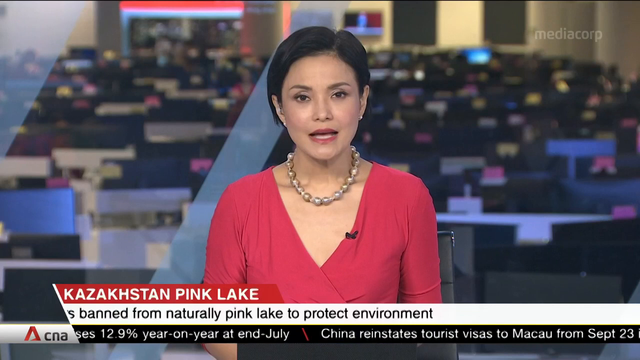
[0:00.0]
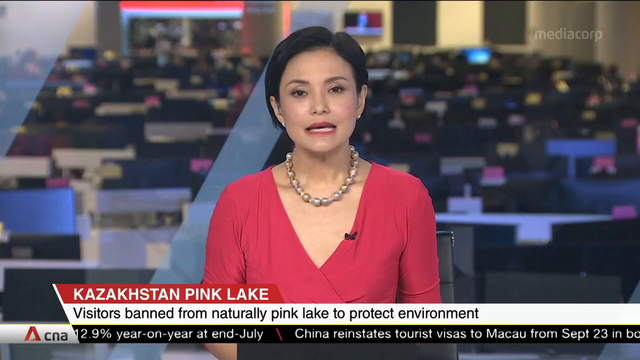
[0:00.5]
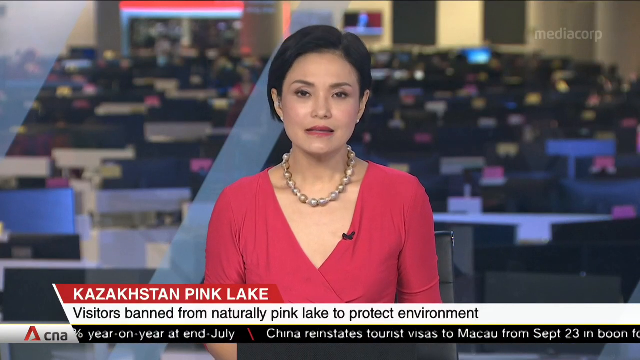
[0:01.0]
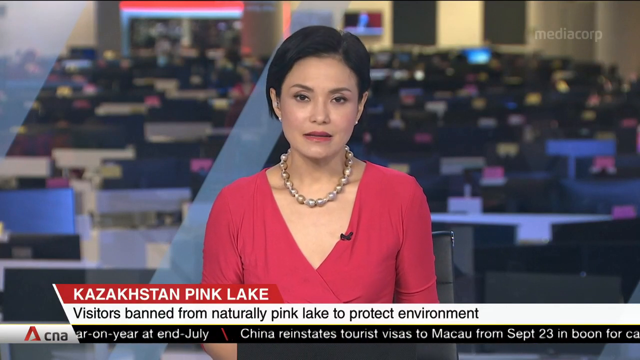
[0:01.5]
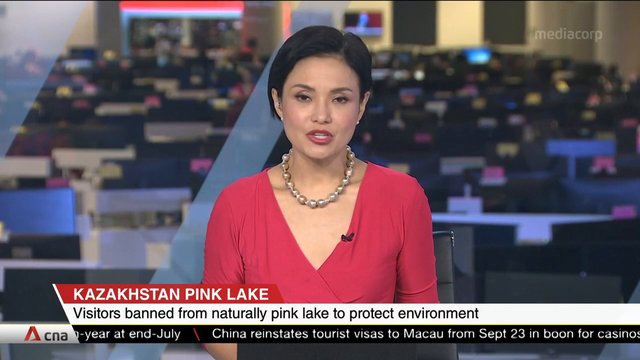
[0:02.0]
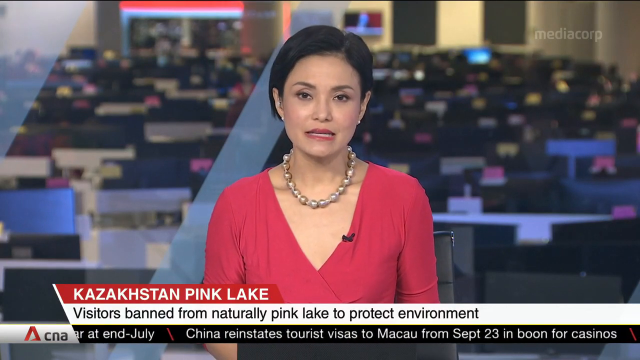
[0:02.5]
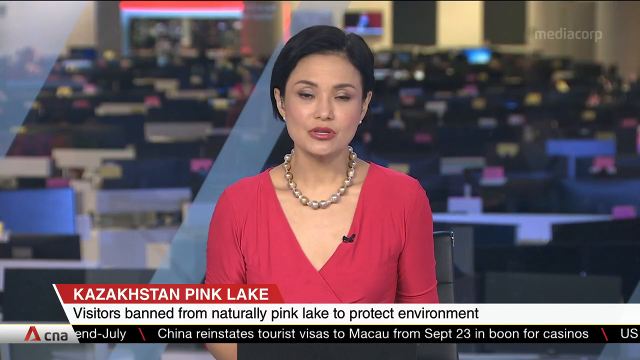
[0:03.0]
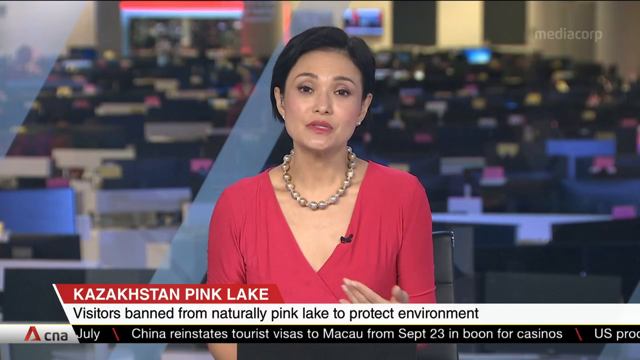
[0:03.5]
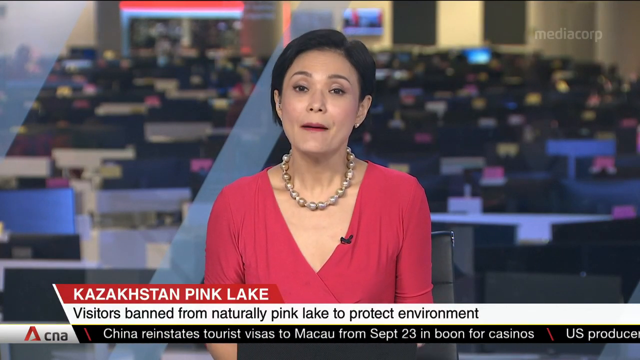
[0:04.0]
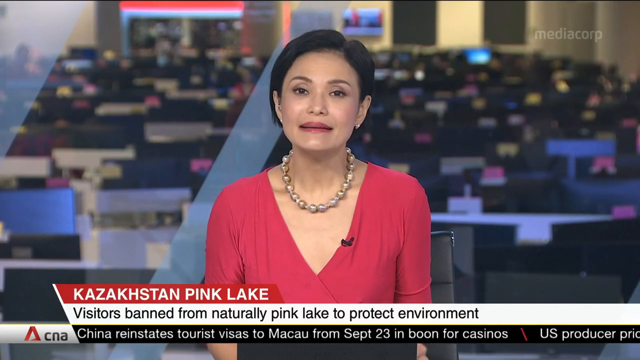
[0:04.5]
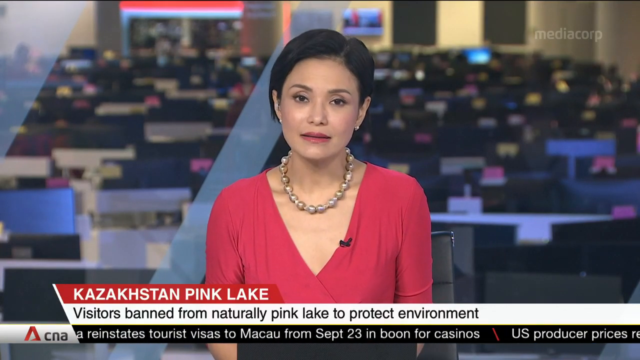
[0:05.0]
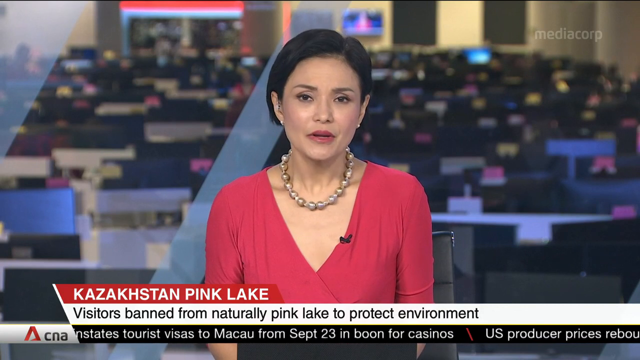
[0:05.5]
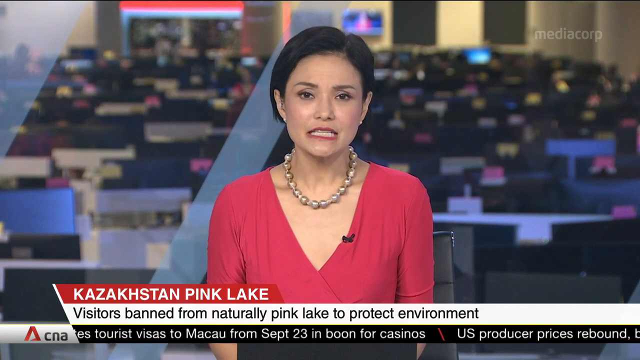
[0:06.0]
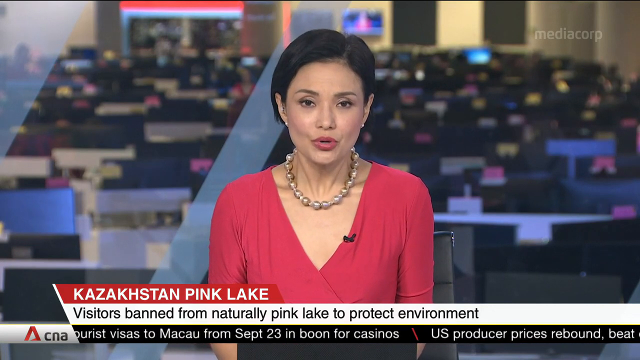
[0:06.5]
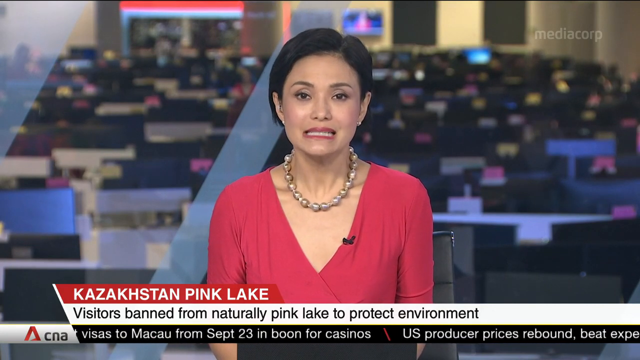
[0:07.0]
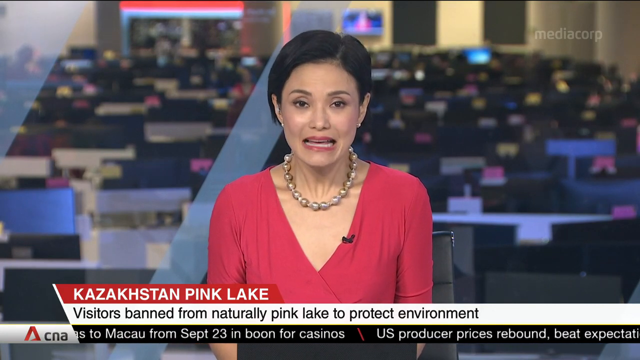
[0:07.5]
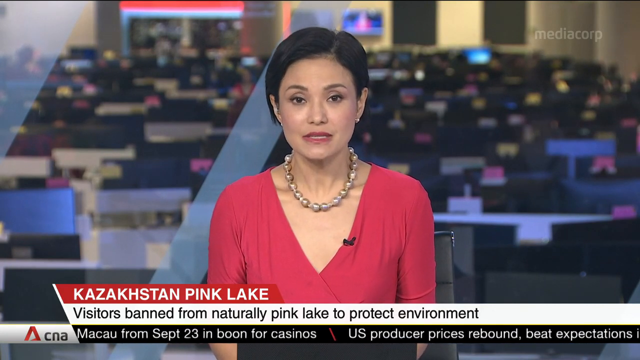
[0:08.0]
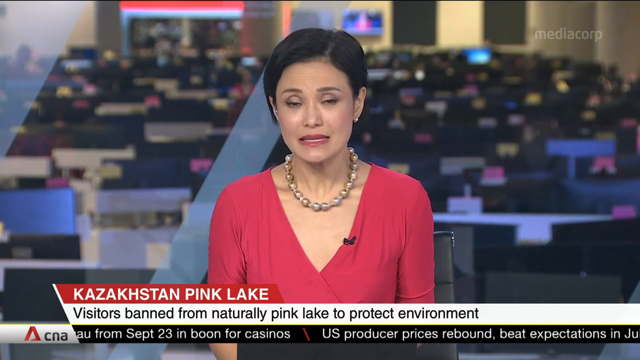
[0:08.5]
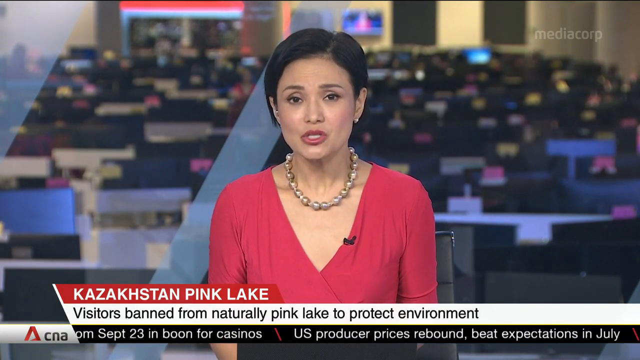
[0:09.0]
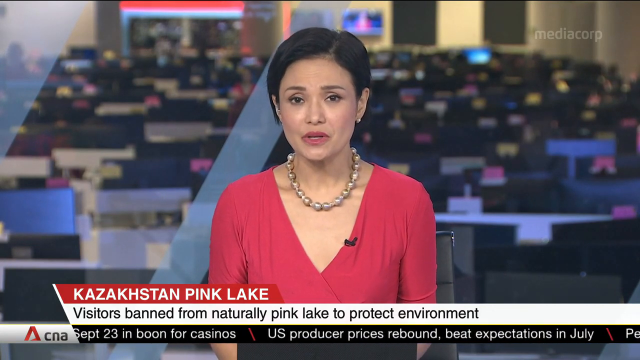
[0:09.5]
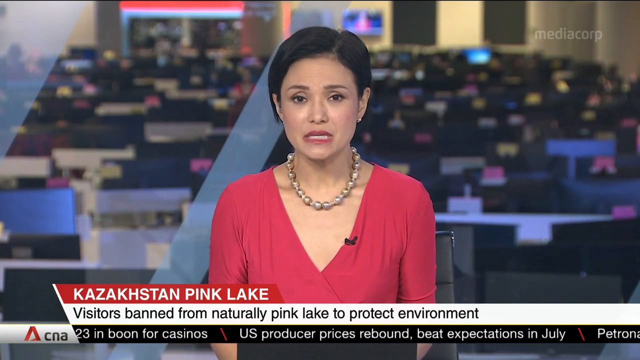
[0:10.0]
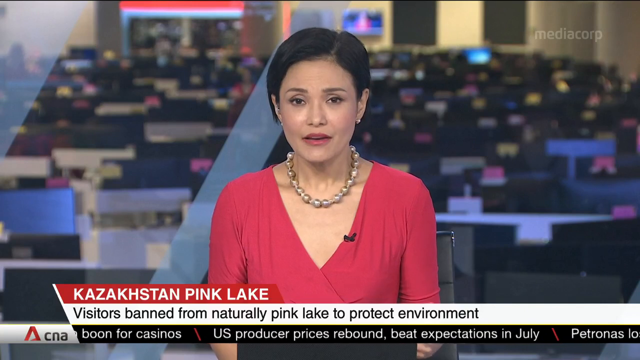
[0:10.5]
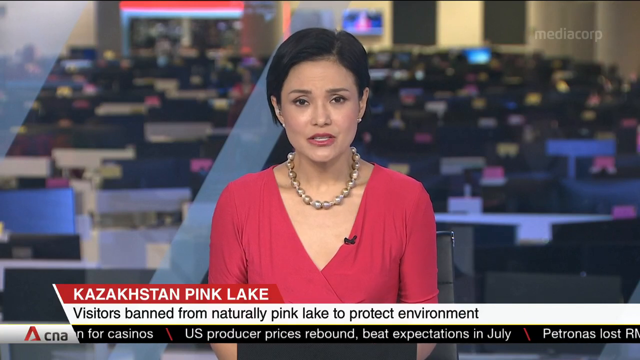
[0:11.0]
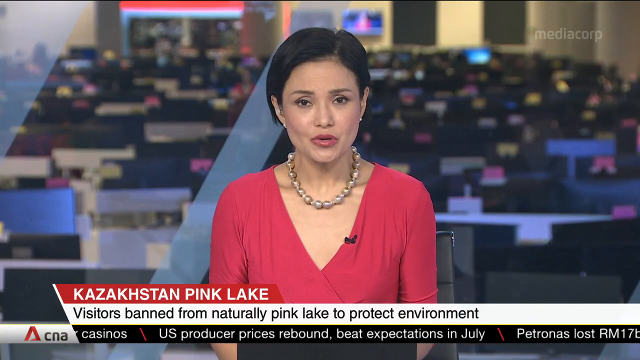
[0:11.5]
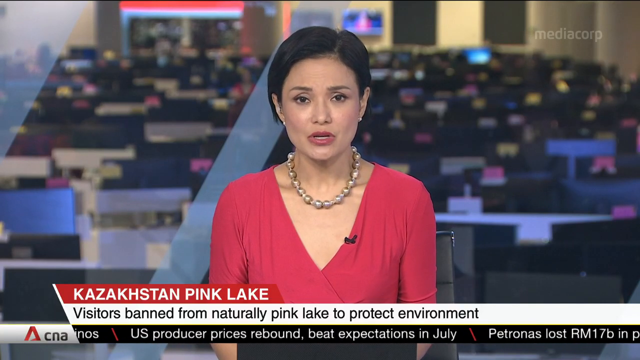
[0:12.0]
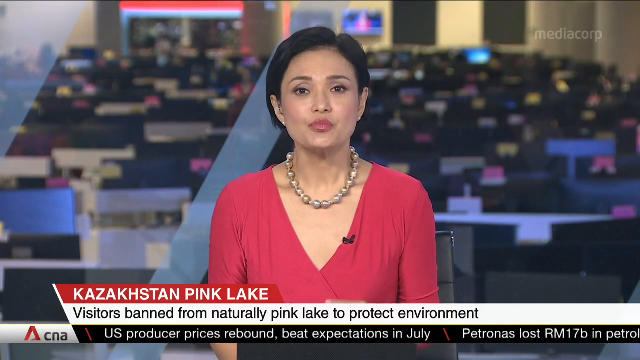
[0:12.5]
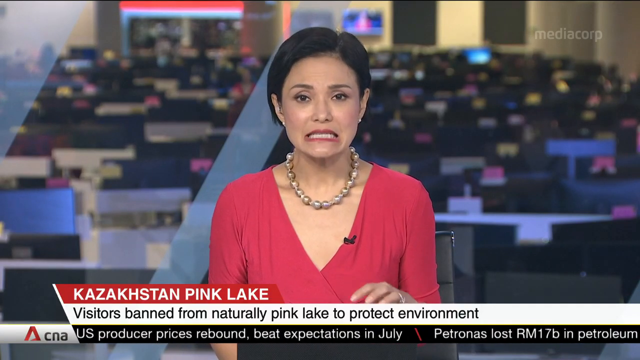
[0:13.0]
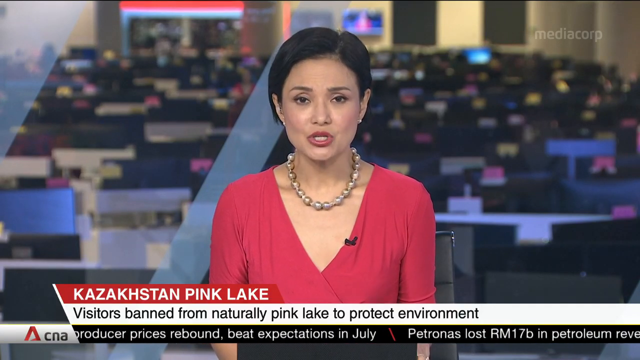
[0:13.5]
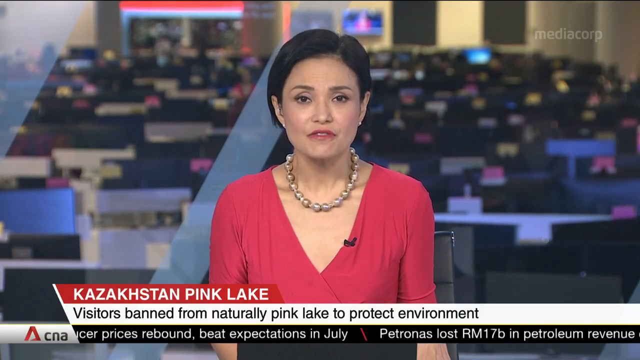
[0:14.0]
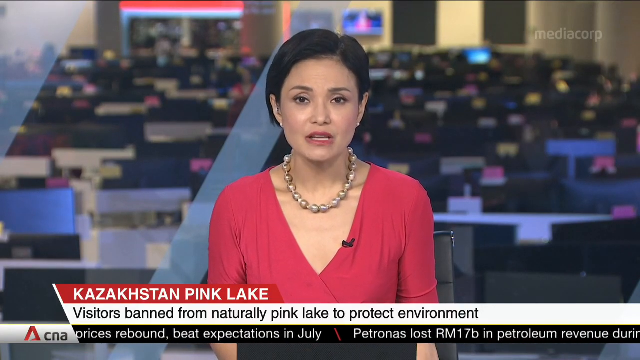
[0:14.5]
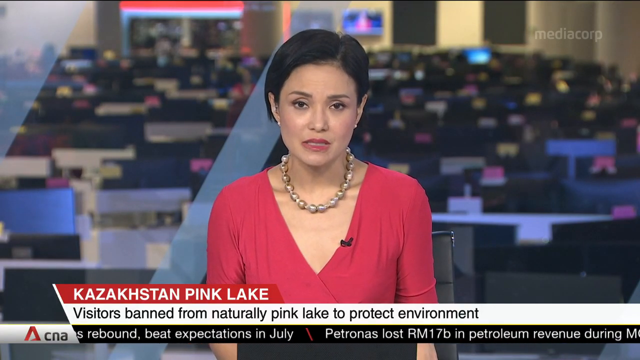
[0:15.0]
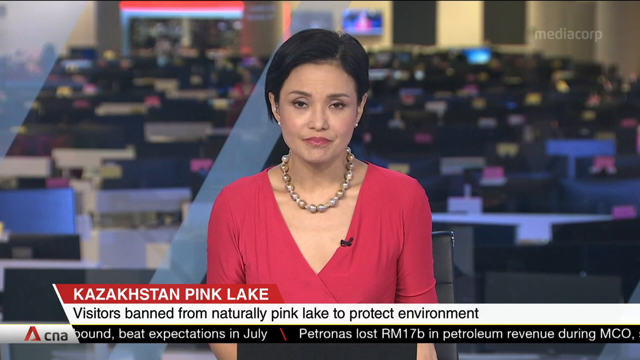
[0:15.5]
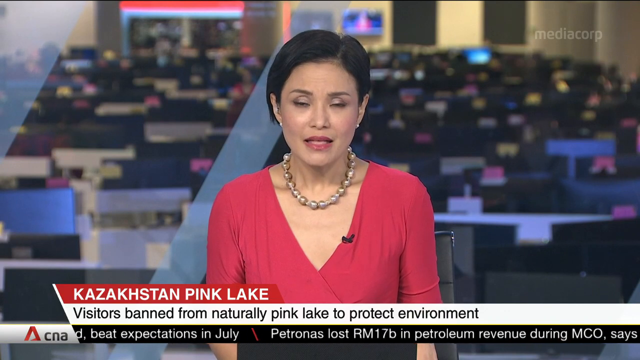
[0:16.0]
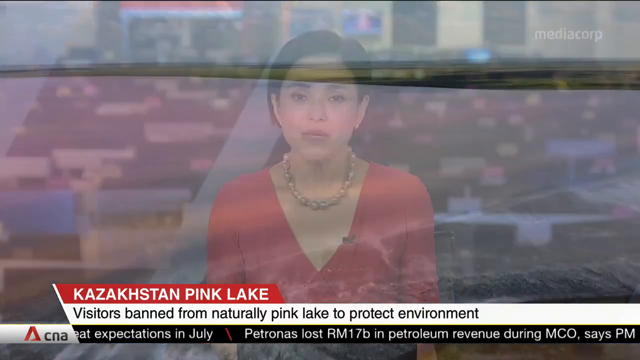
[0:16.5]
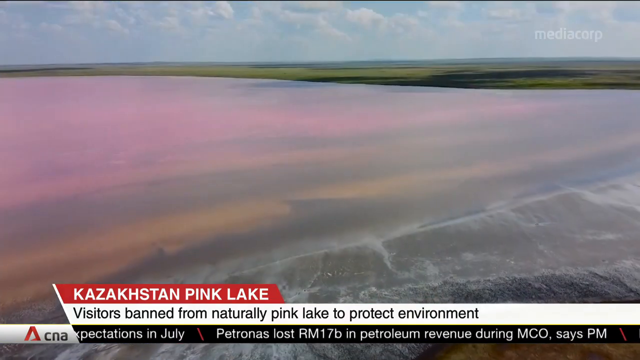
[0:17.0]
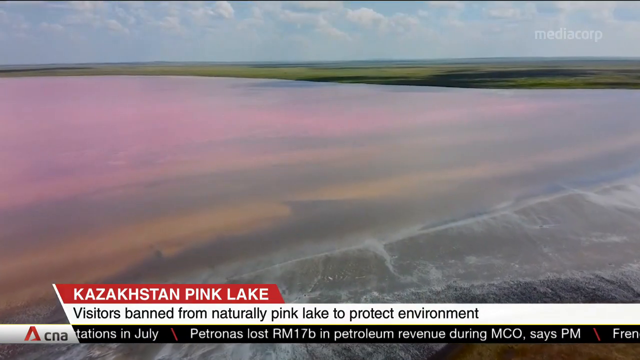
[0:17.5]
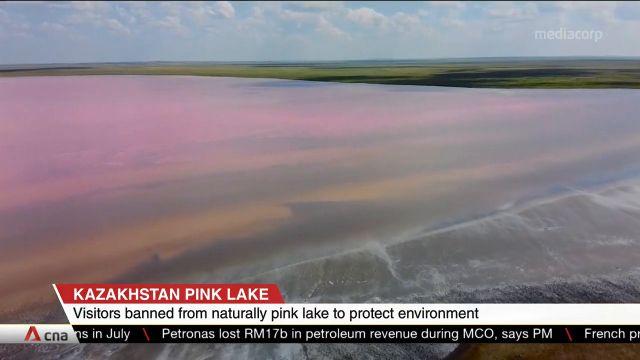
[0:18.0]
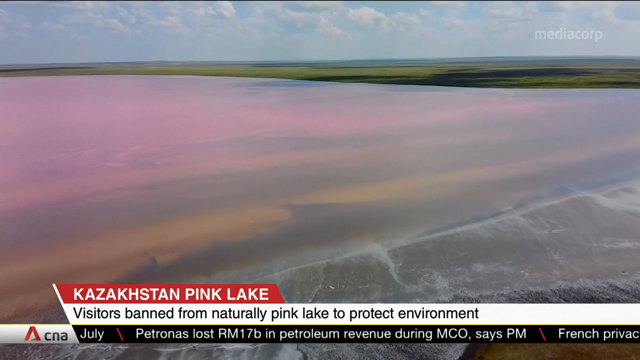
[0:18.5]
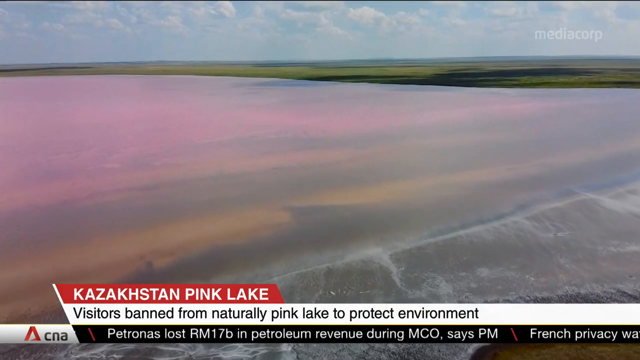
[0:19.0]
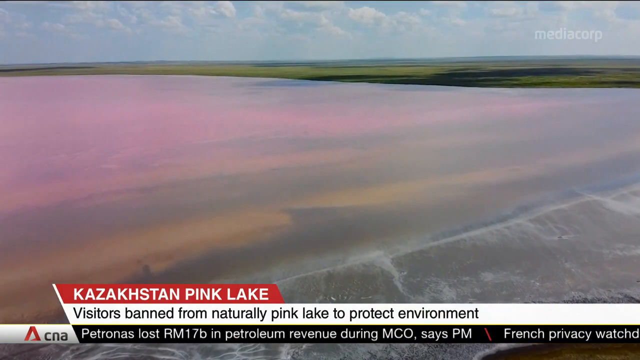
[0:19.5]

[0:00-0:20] A CNA news broadcast segment opens on an anchor sitting behind a desk, with a newsroom full of computer monitors, desks and cubicles behind her. She wears a red dress and a very large beaded pearl necklace and looks and speaks directly at the camera. A banner runs along the bottom of the screen: on its top part, toward the left, a red rectangle reads "Kazakhstan Pink Lake", and below it a white banner reads "visitors banned from naturally pink lake to protect environment". Directly below the white banner is a black scrolling banner with the CNA logo on its left. In the top right corner is a white, semi-transparent watermark reading "Mediacorp". The video then transitions from the anchor at the desk to footage of the pink lake, which is not entirely pink but has large areas of pink-hued water.